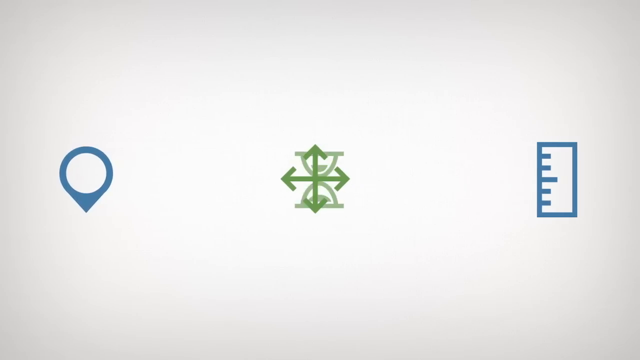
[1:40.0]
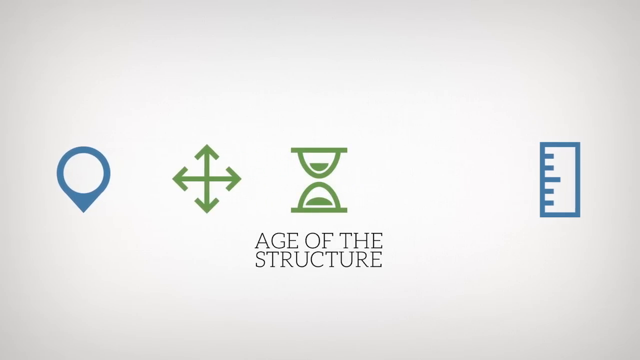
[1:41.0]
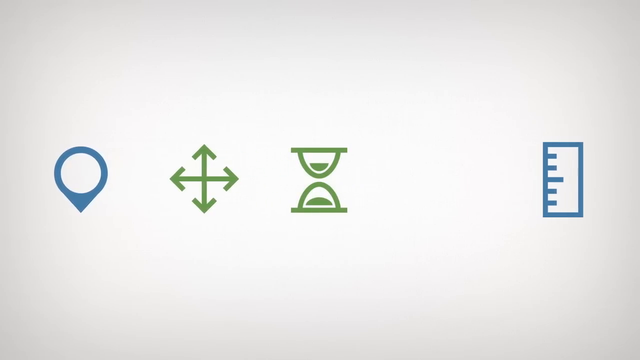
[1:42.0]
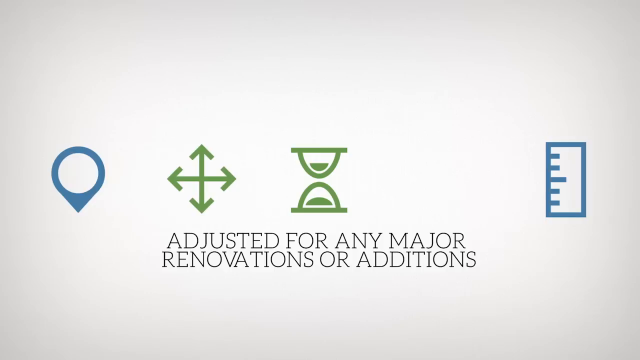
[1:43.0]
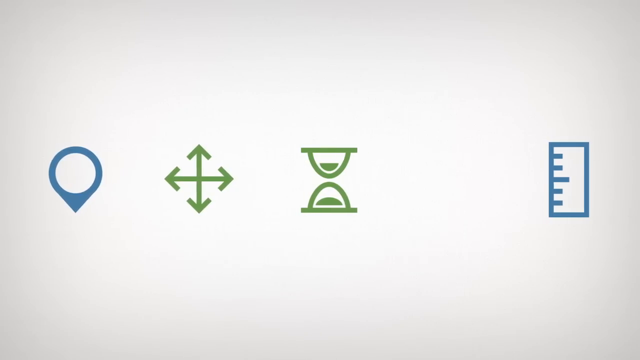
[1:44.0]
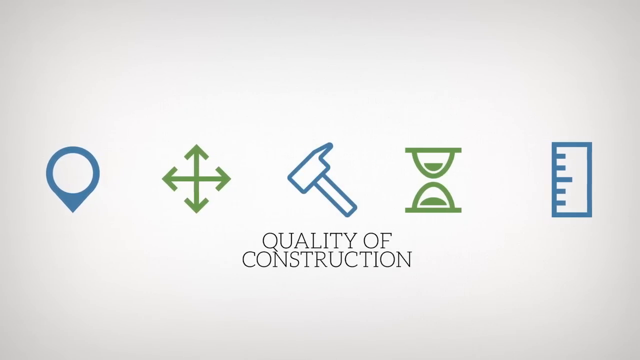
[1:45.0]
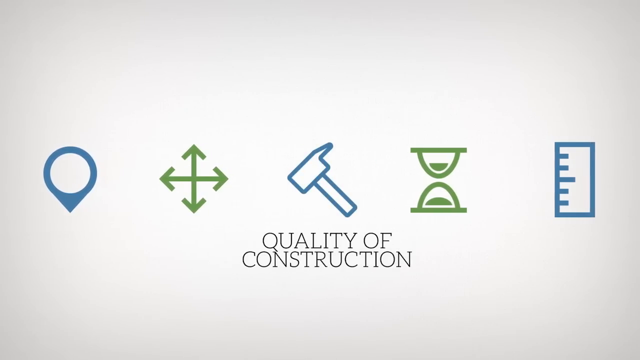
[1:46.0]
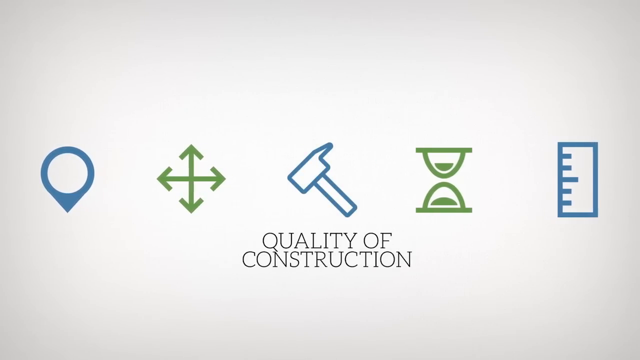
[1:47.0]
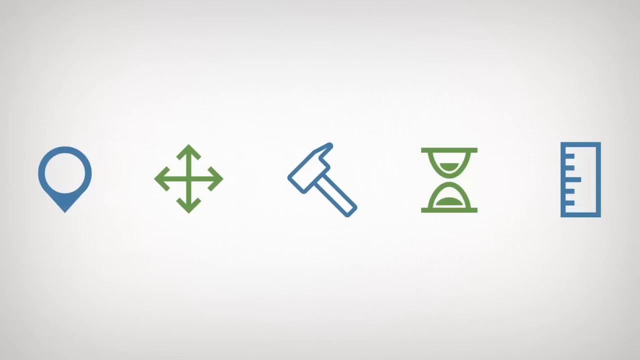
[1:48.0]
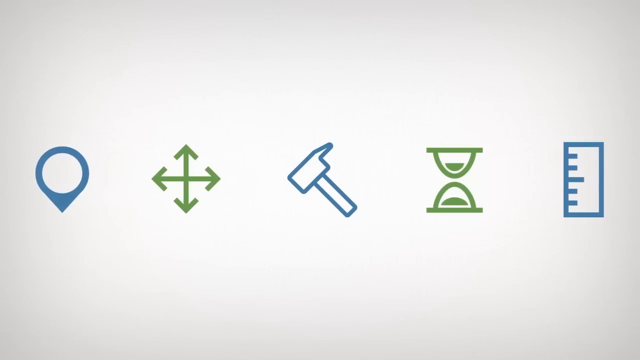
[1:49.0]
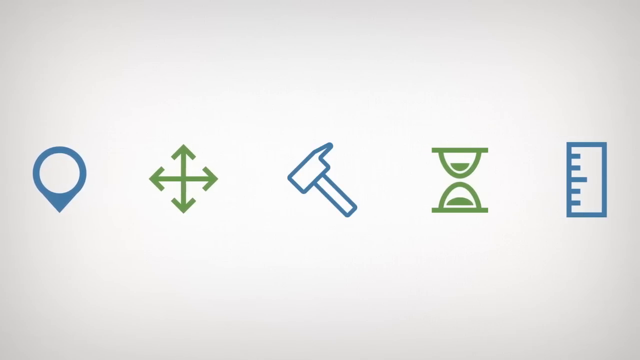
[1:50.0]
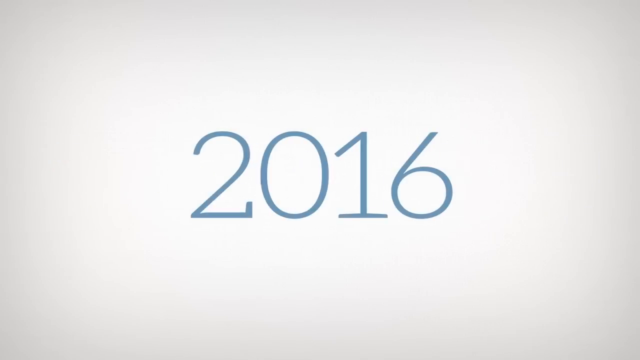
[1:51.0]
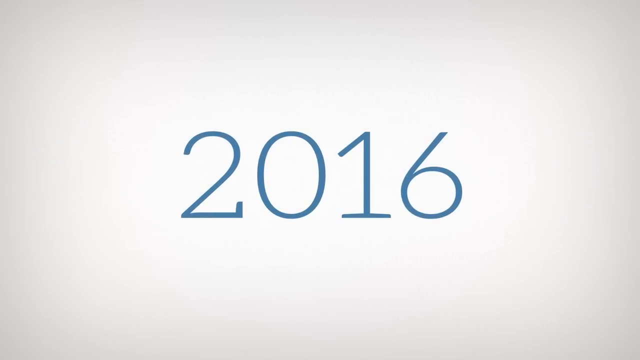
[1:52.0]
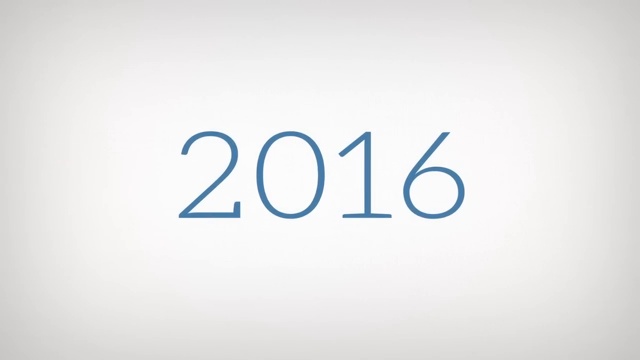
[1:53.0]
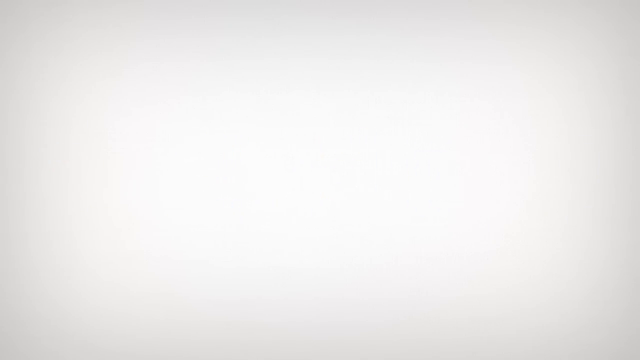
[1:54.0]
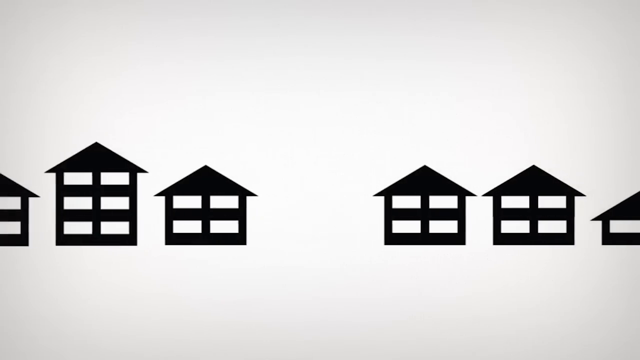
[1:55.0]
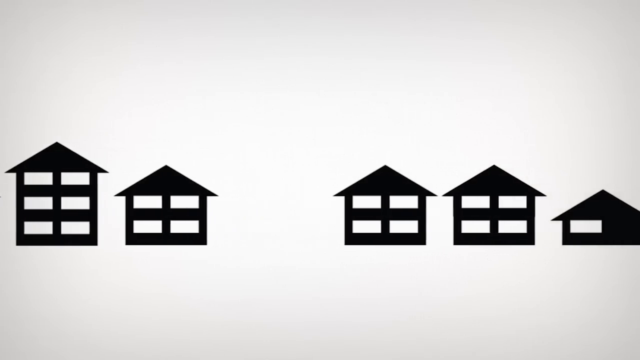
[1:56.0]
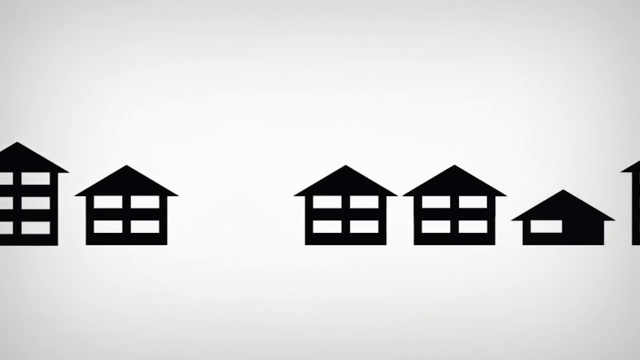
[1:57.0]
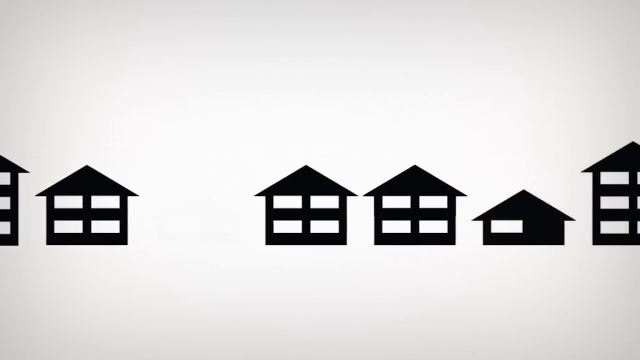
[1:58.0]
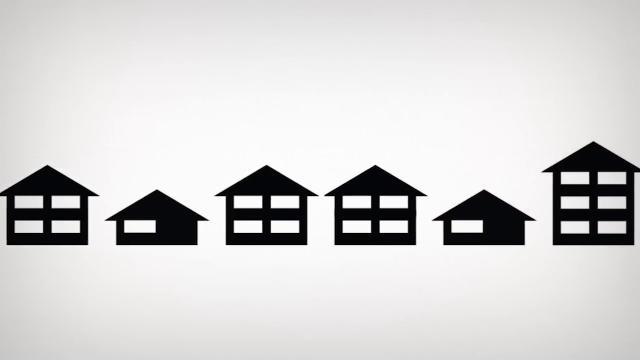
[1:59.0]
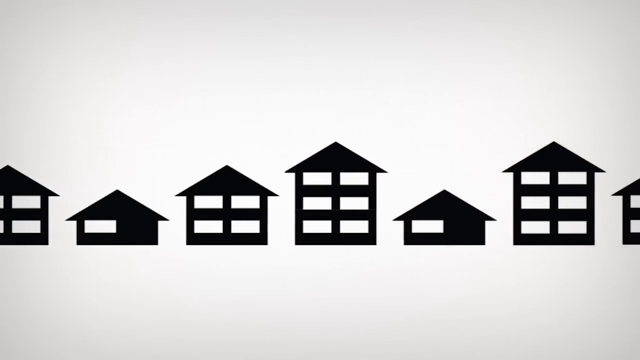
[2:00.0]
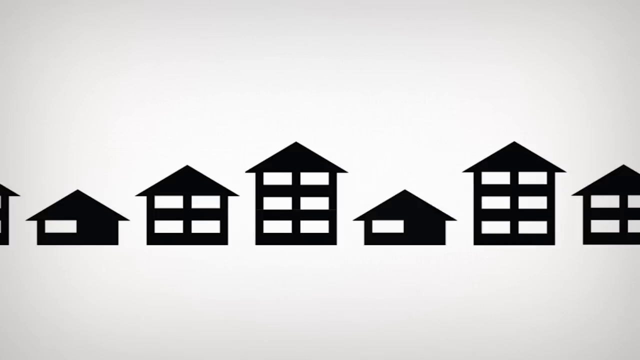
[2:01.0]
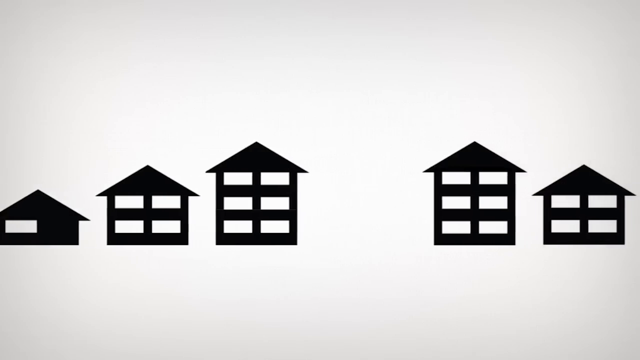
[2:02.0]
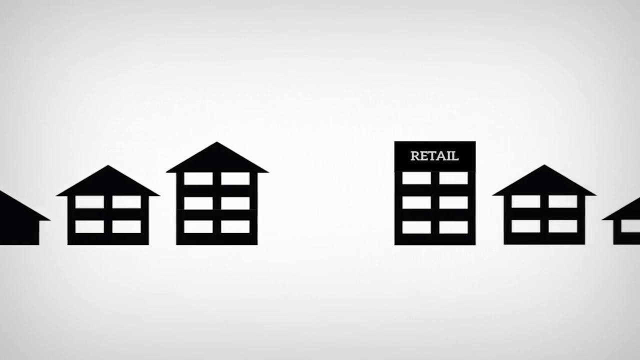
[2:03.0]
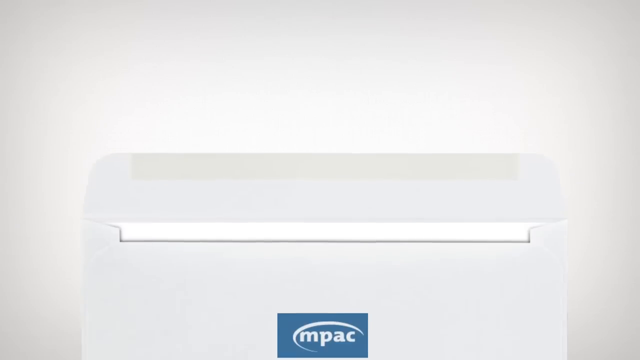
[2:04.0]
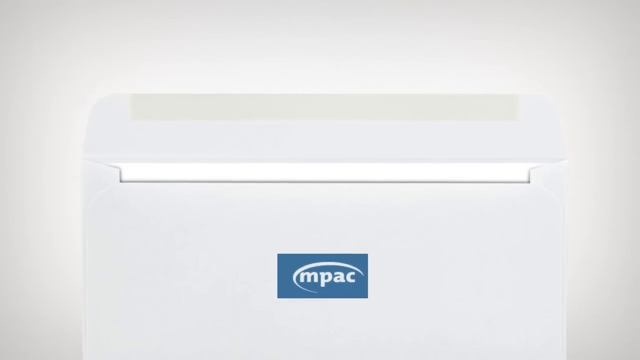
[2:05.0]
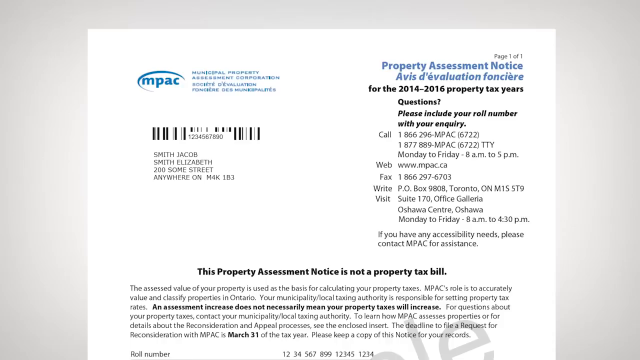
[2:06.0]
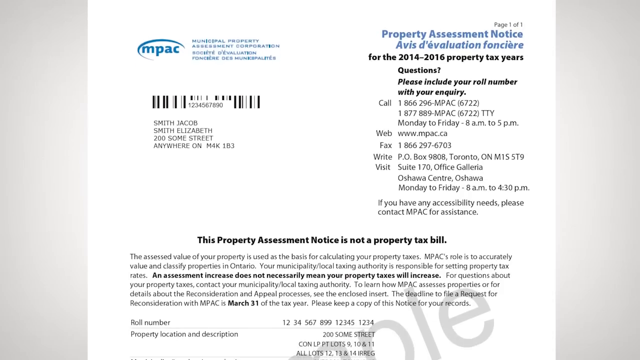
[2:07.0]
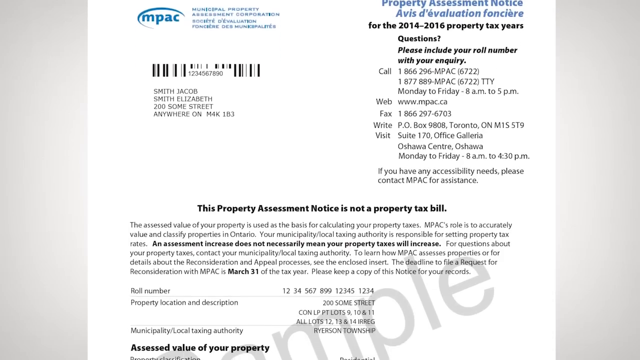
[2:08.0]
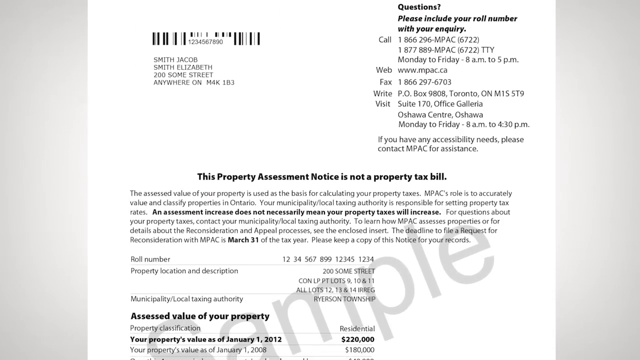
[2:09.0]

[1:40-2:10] Several icons are on the screen, including an image of a green hourglass with the text "age of the structure" underneath it. The icons kind of spread out across the width of the screen, and more text appears reading "adjusted for any major renovations or additions". Then a simply drawn, icon-style image of a hammer appears, with "quality of construction" written underneath it.